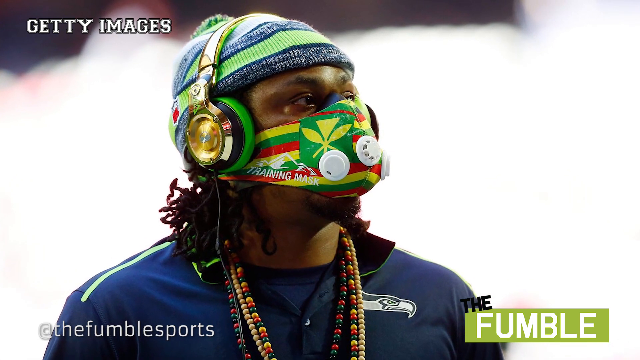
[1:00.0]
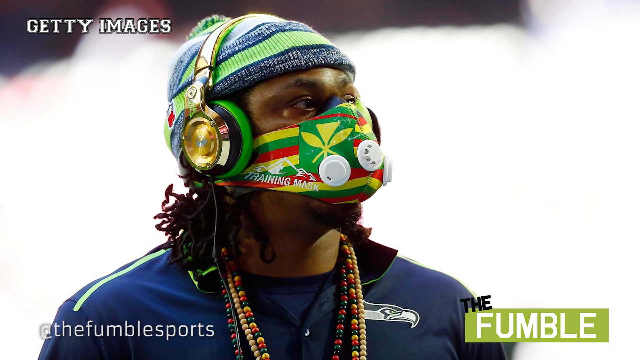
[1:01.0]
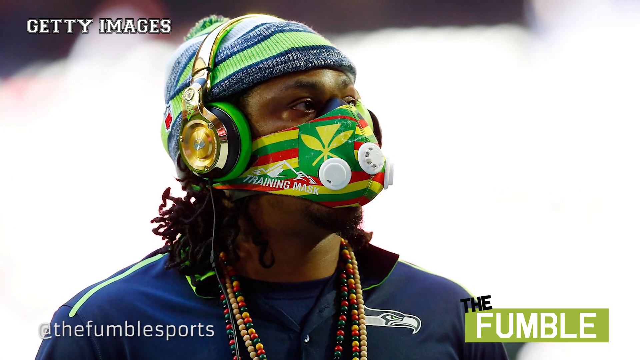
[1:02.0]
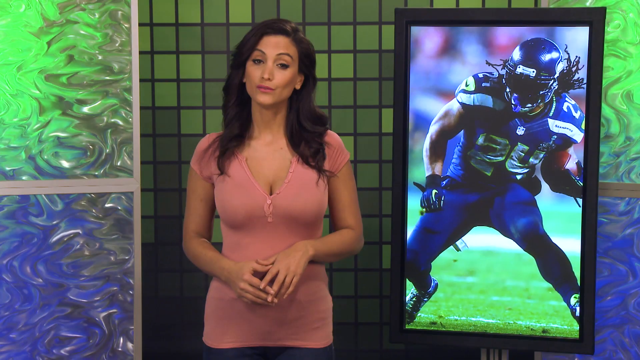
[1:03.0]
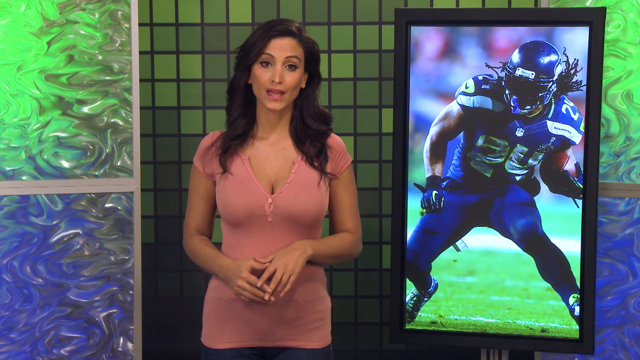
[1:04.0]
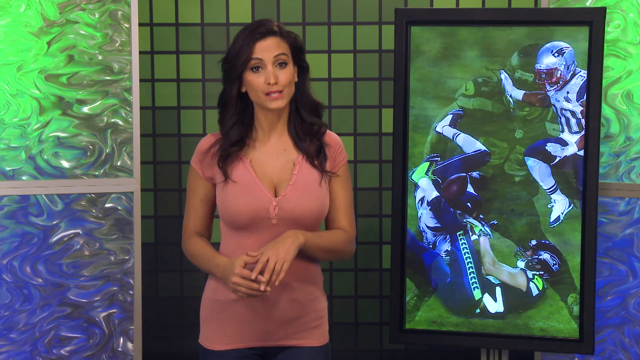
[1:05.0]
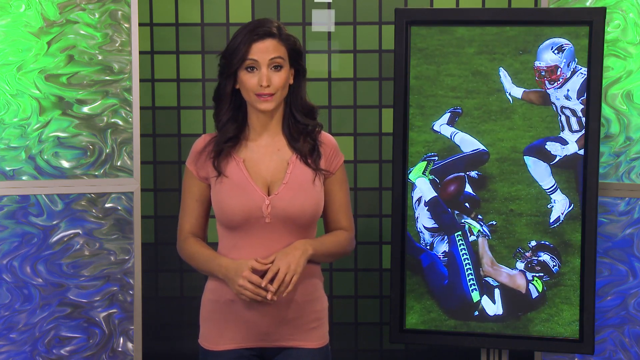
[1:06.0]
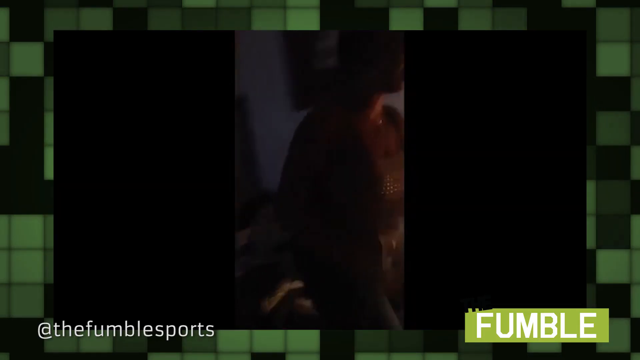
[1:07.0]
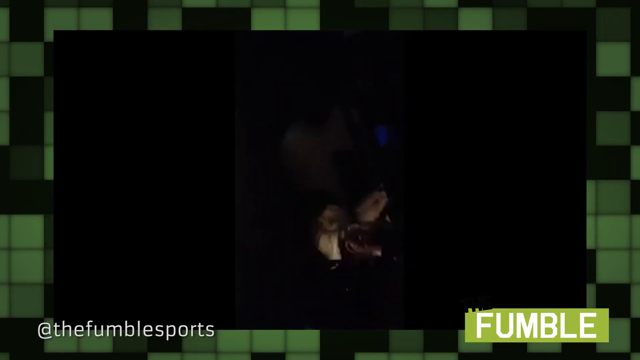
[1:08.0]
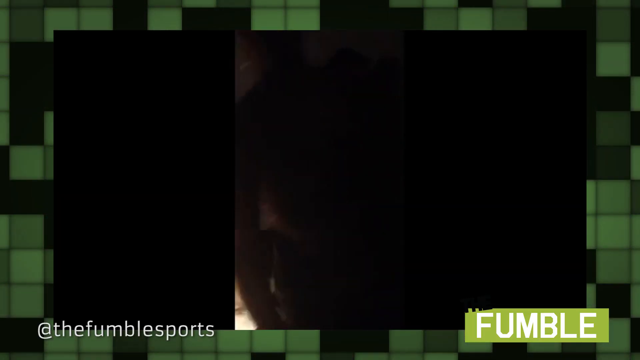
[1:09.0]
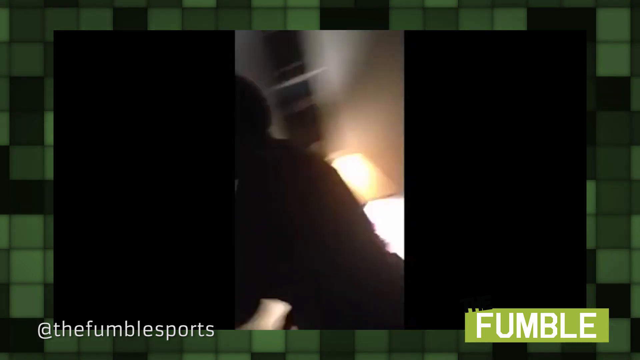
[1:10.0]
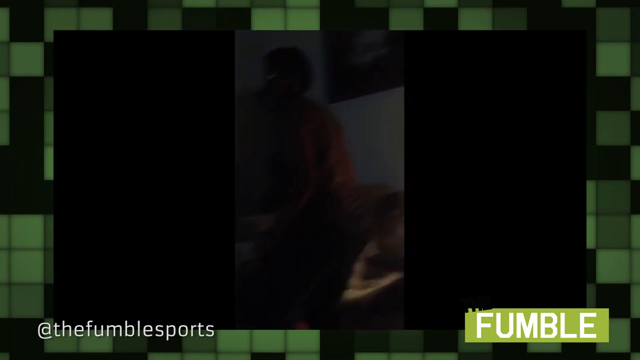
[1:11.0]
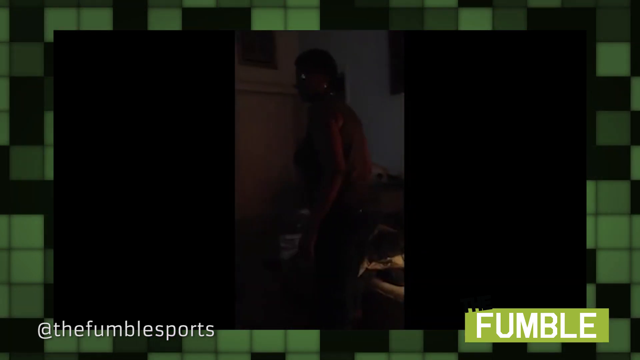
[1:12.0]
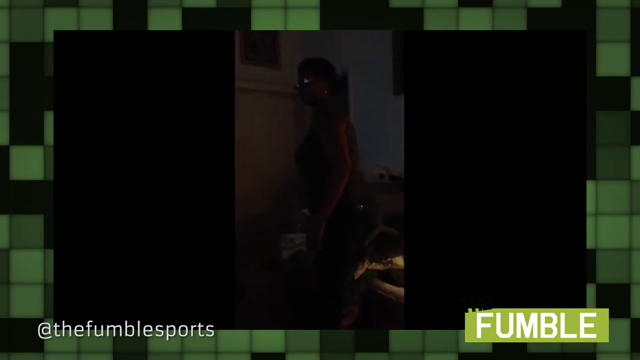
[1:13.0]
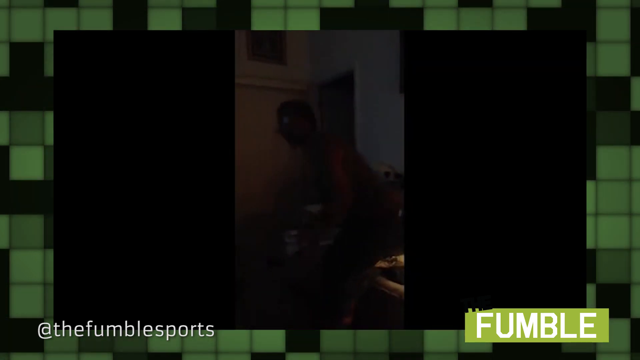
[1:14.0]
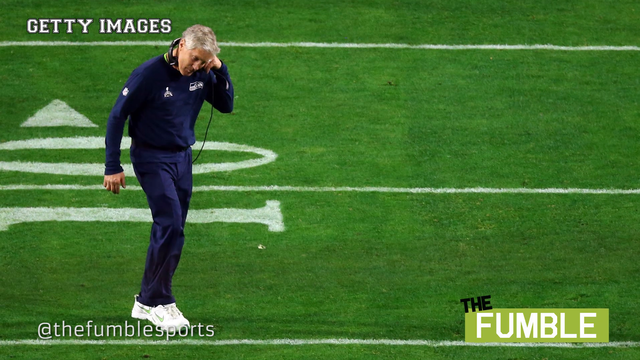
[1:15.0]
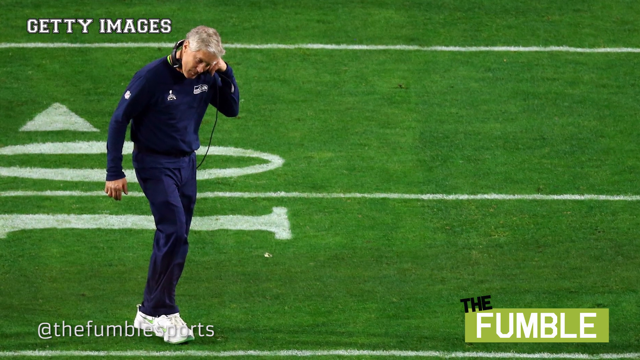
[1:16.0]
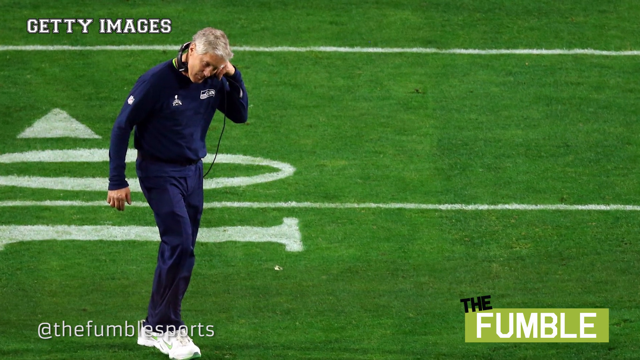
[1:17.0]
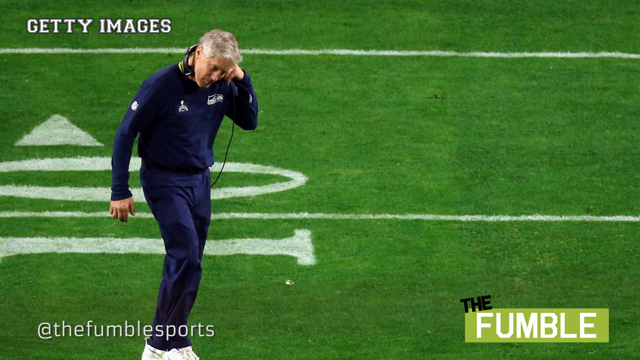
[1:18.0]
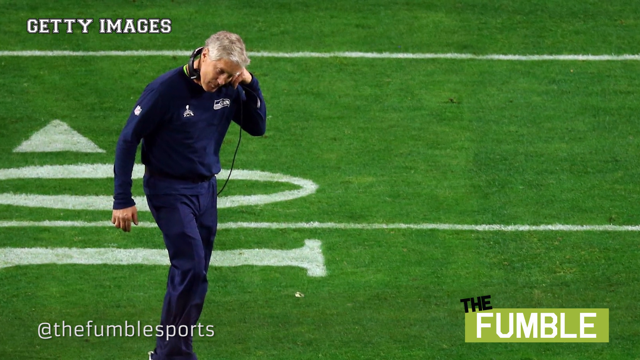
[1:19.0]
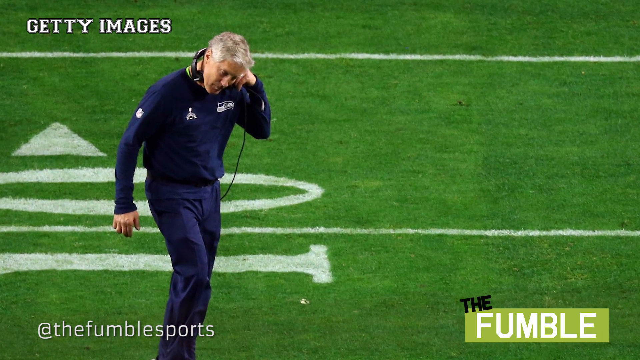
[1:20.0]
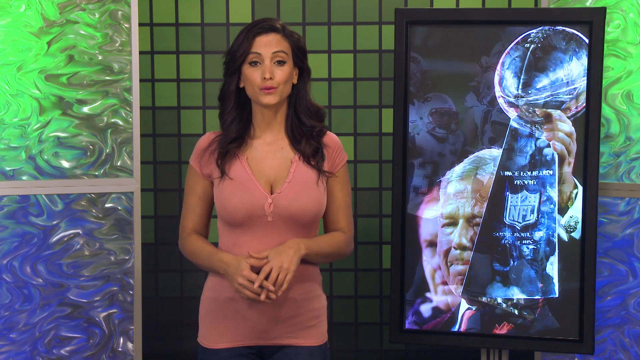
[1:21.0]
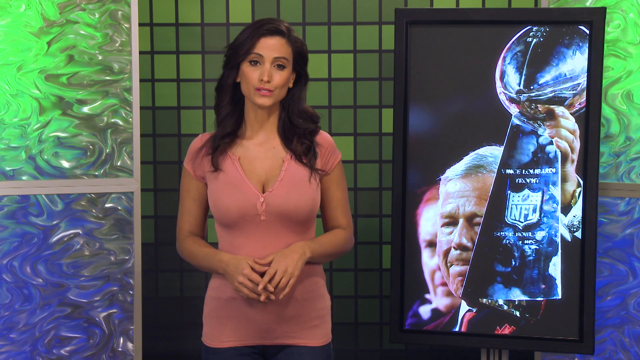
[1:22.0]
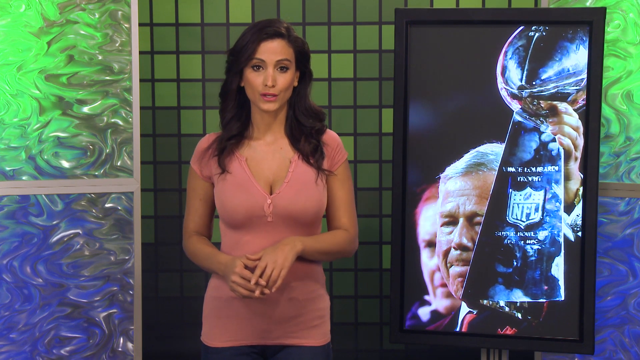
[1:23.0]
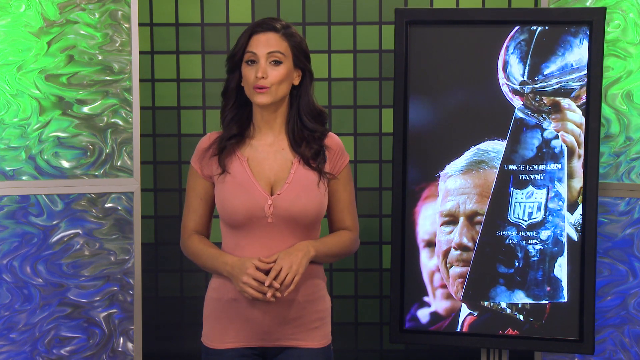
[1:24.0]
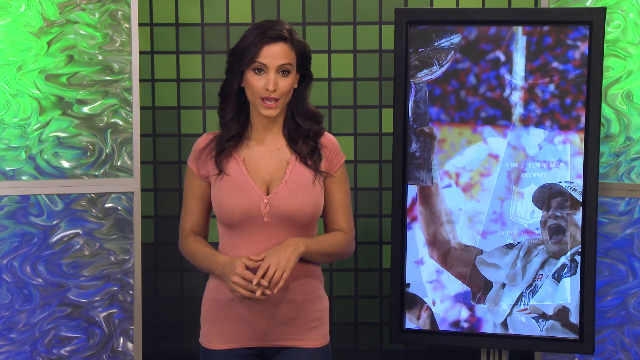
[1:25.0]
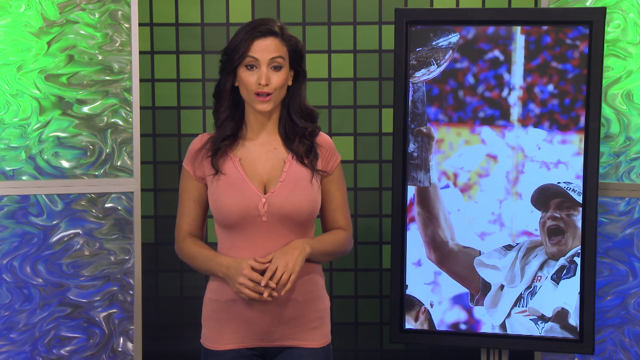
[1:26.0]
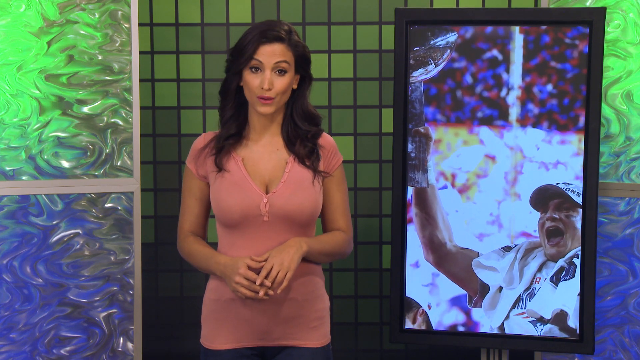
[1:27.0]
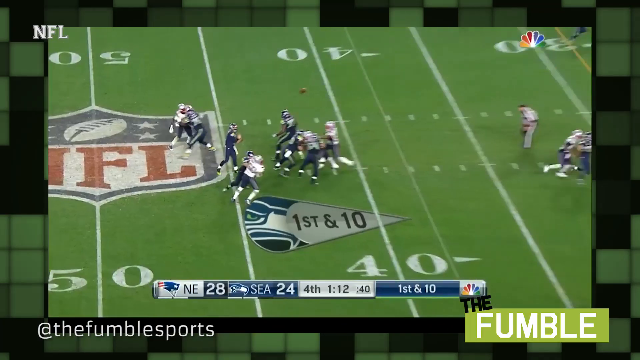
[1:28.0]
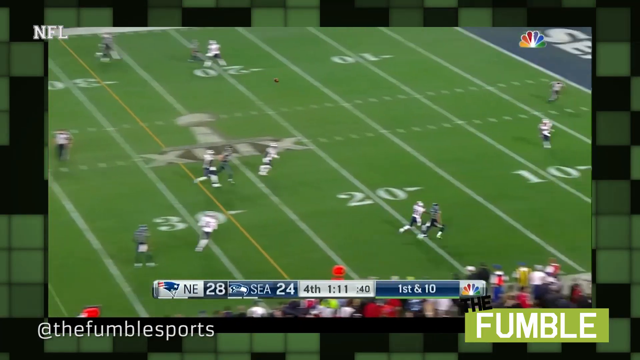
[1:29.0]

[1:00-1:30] The Seattle Seahawks player wears a red, green, and yellow mask around his face and has headphones on. The video cuts back to Crystal, the female reporter in the pink dress, whose mouth keeps moving as she talks. More footage follows, apparently of someone upset in their house: the person, who appears a little older, paces back and forth until getting back to the couch, then drops their arms and yells. This footage is fairly dark and blurry. The imagery then changes to Pete Carroll, the Seattle Seahawks coach at the time, near the 10-yard line, looking down and seemingly scratching the side of his head with his left hand; the camera zooms in on him. The camera switches back to Crystal, still talking, and then to game footage of Russell Wilson throwing a pass down the sideline that appears to be broken up.